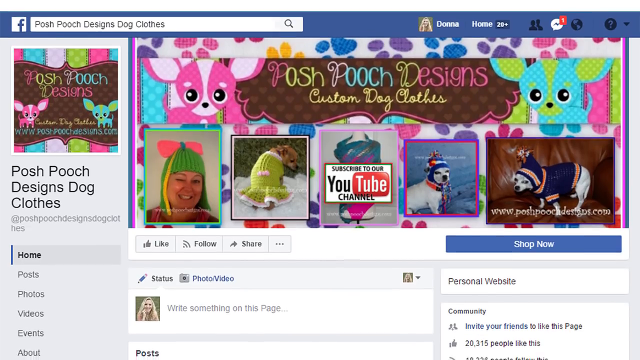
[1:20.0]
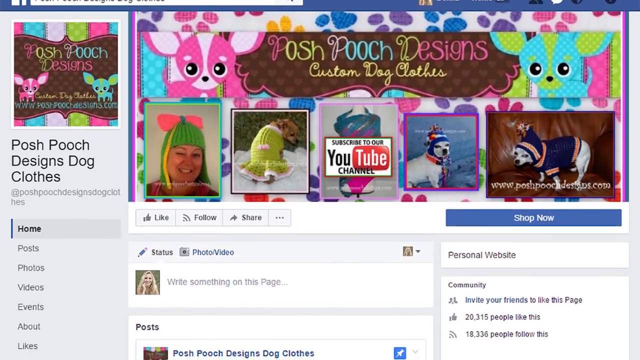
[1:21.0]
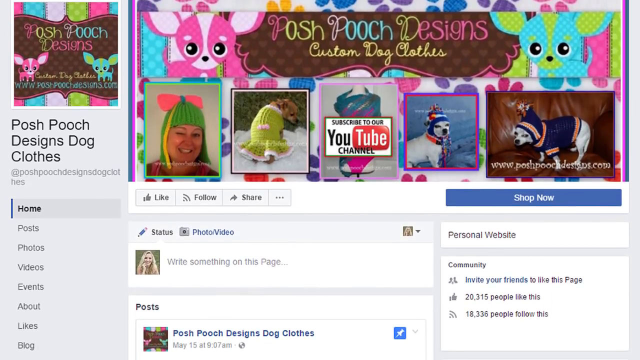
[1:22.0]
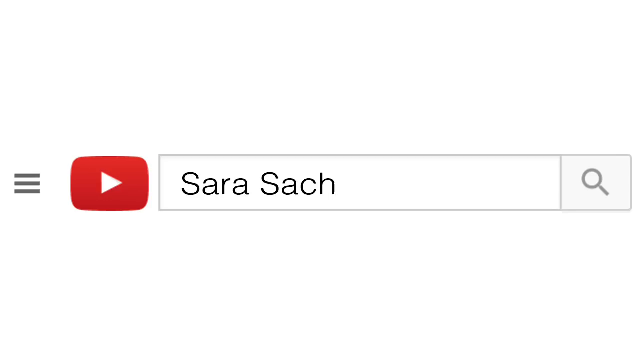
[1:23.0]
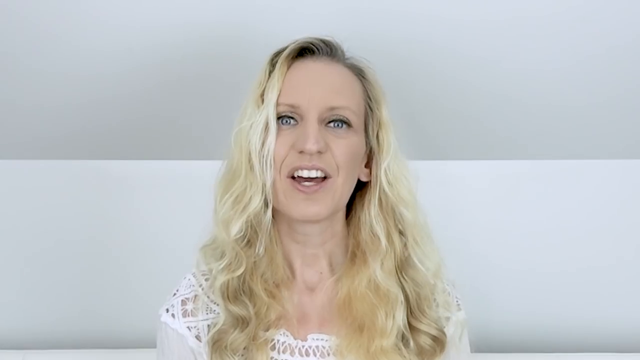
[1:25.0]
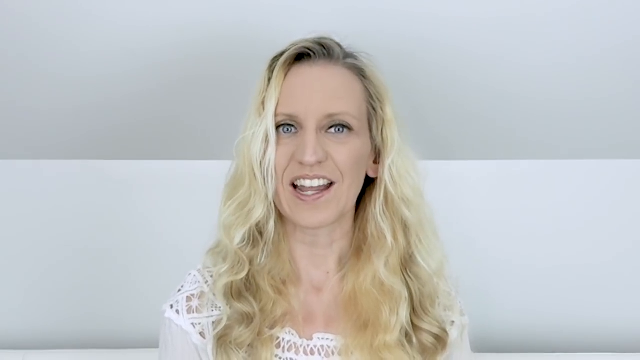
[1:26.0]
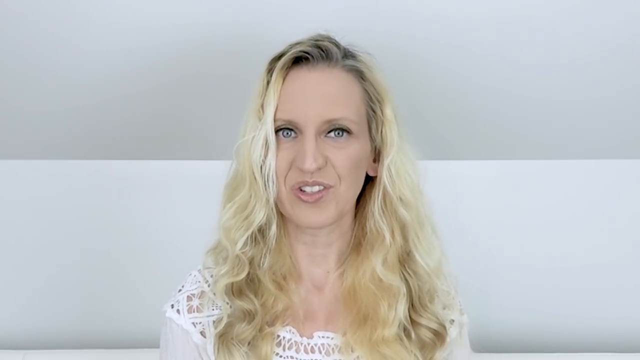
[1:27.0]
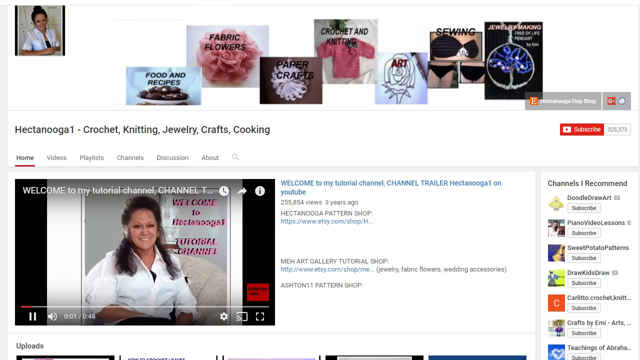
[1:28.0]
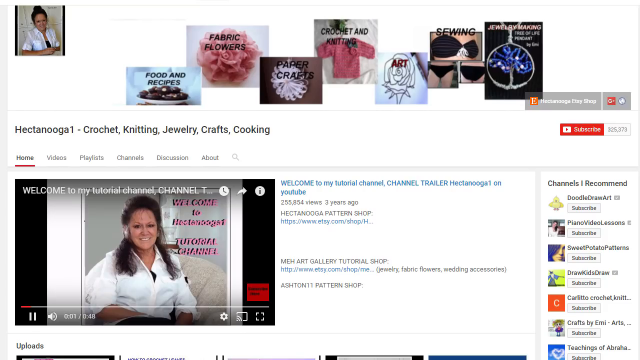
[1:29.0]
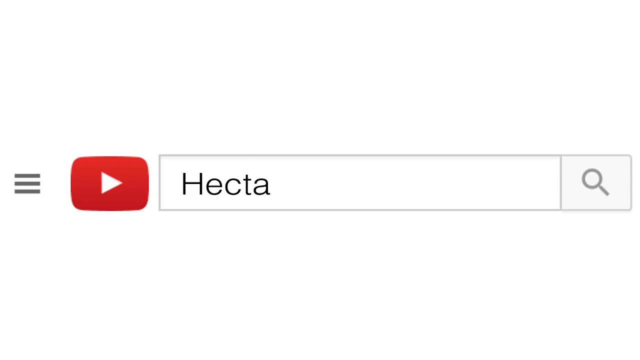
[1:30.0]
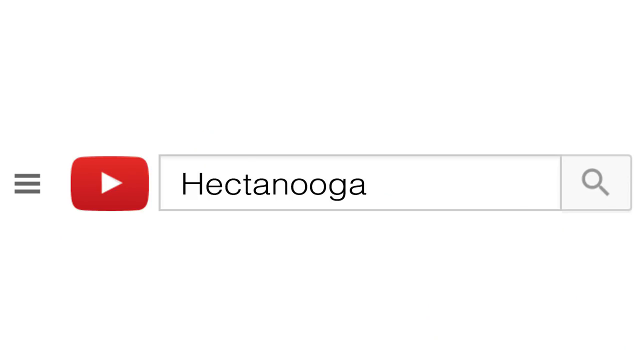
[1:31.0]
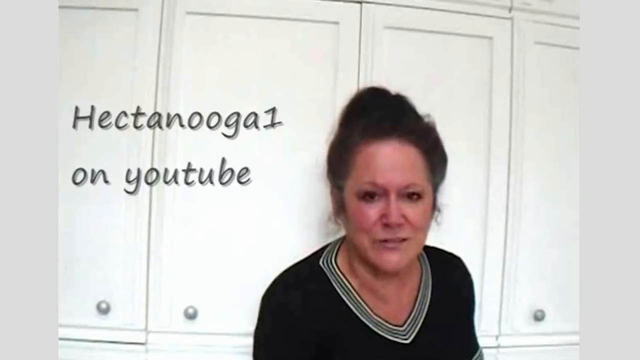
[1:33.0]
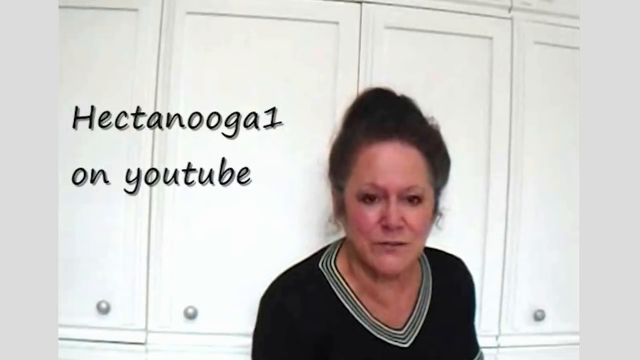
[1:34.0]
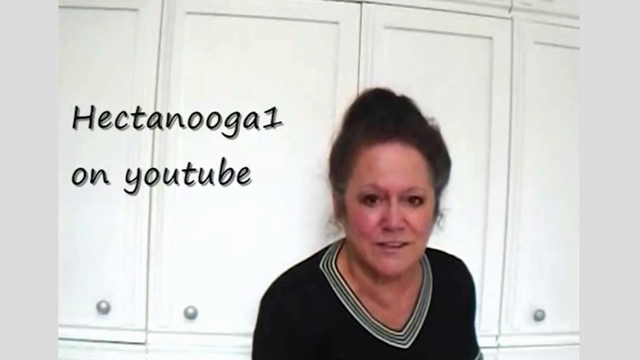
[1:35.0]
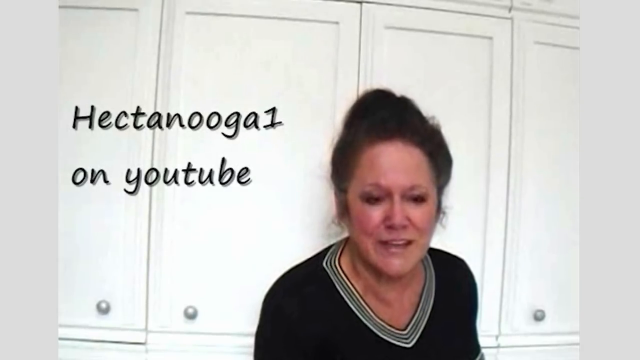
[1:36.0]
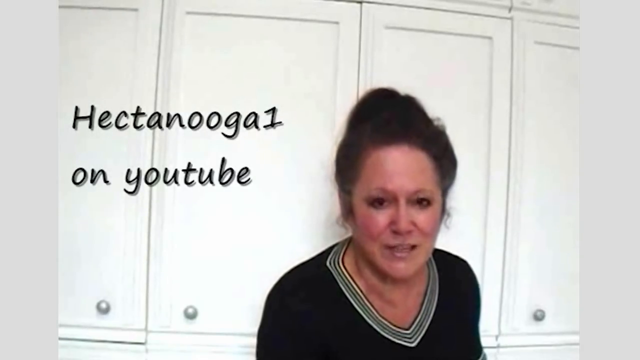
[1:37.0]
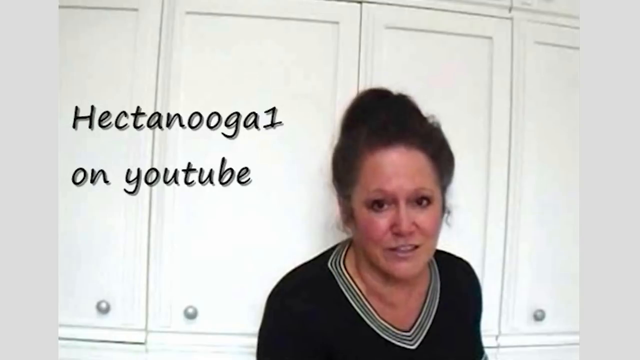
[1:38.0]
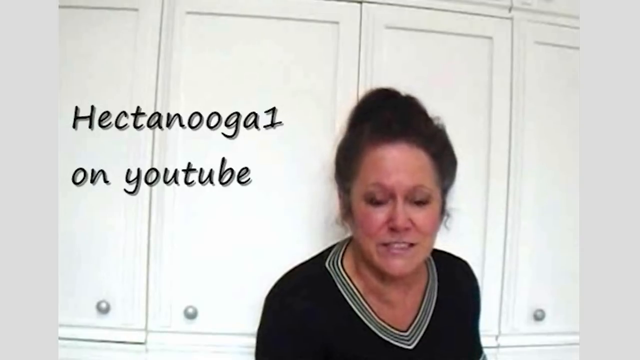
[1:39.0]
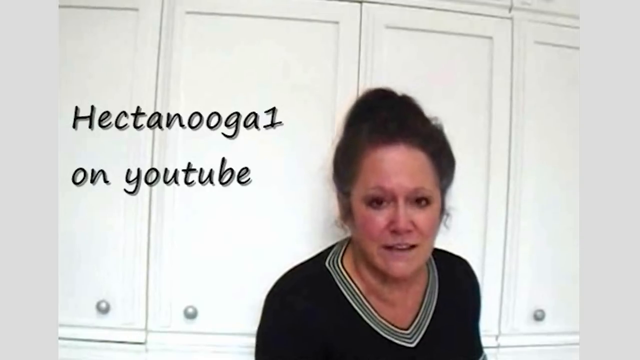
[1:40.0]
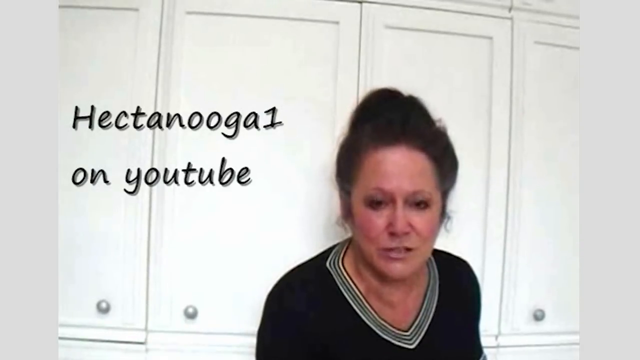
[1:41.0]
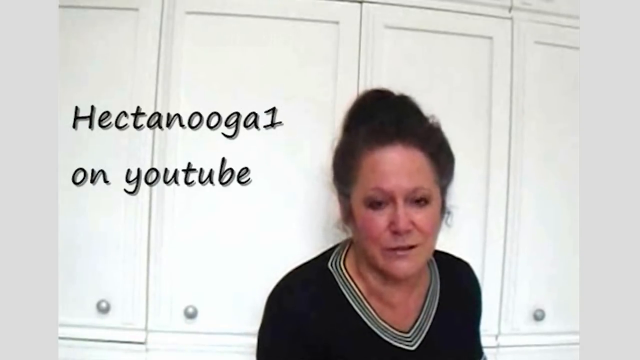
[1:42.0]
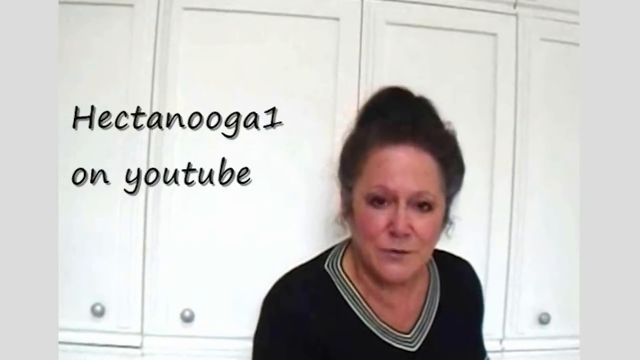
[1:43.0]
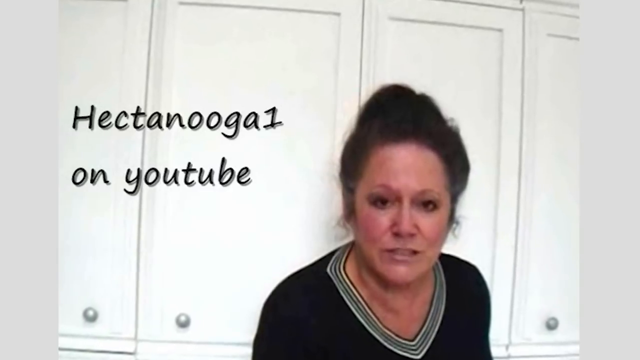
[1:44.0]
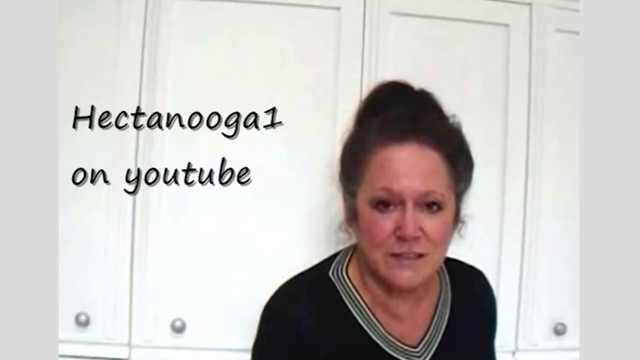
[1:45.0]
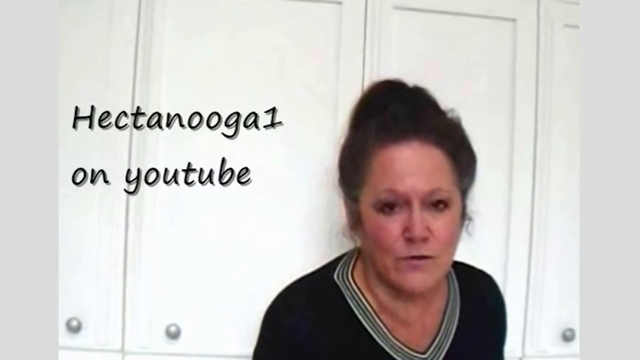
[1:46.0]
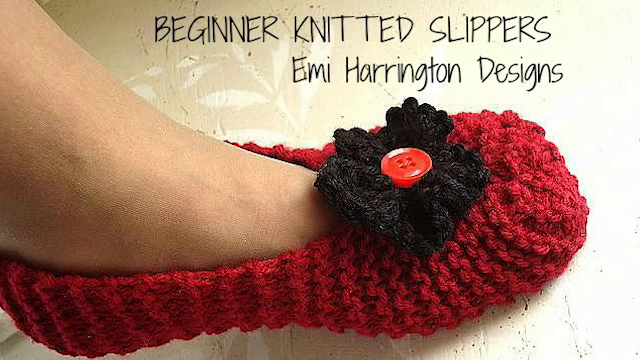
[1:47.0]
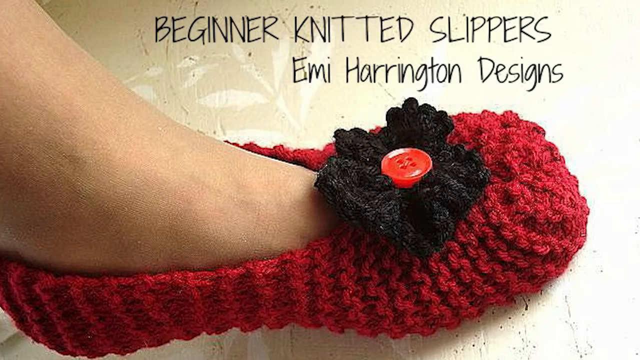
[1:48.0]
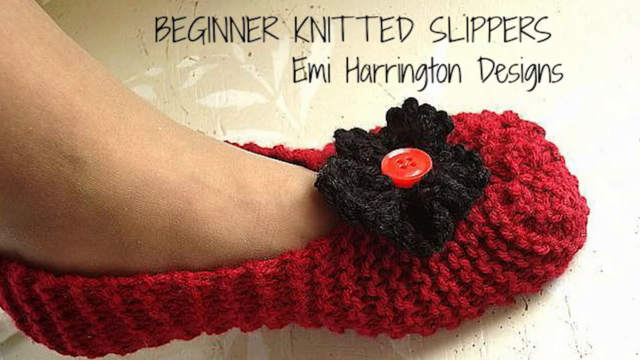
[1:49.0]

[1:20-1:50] The Facebook page for Posh Pooch Design dog clothes is shown, with the same cartoon chihuahuas in the banner. Below this is a photograph of the woman wearing a green hat with a flap that covers the back of her head and a pink bow on top. There is a dog wearing a green crochet dress, a button to subscribe to the YouTube channel, an image of a dog wearing a hat tied around its neck, and a final image of the dog wearing a hat and a jumper, looking like it is grimacing at the camera. Scrolling slightly down the page shows over 20,000 people who like it and 18,000 who follow it. The Sara Sach YouTube search page briefly appears, and then the blonde-haired woman in the white room is shown, still talking to the camera. The name Hektanuga1 is searched for in a search bar. Next is a clip from a video of a dark-haired woman in front of a double set of white wardrobes, talking to the camera; the quality is quite poor and blurry, and the camera pans in slightly on her face as she talks. The next image is for beginner knitted slippers by Emmy Harrington designs: a red chunky crochet slipper with a black flower with a red button in its centre, shown on somebody's foot with no socks.